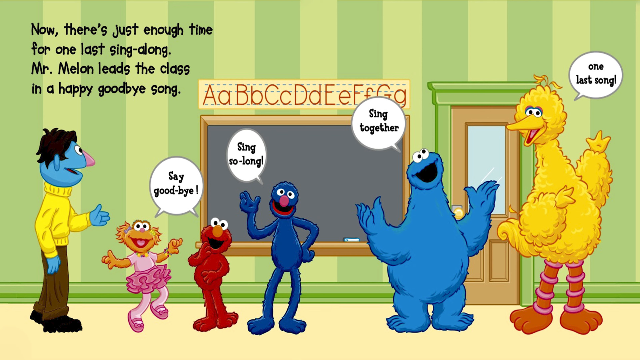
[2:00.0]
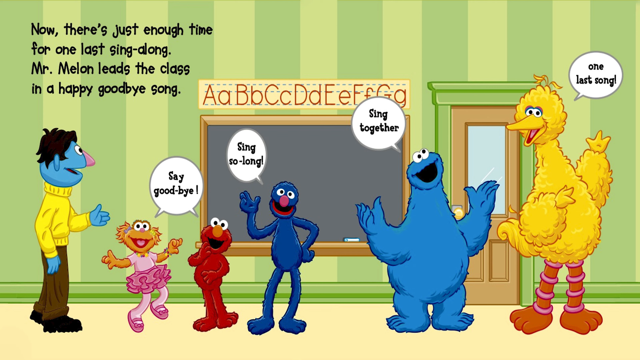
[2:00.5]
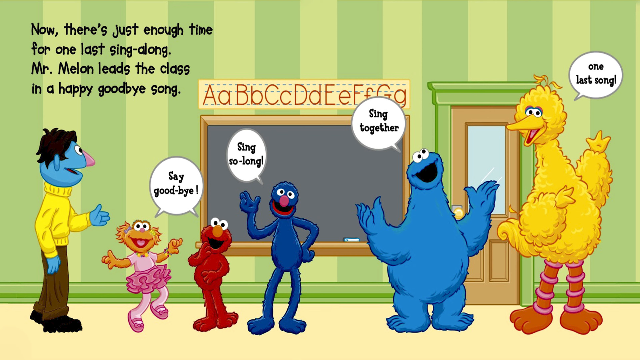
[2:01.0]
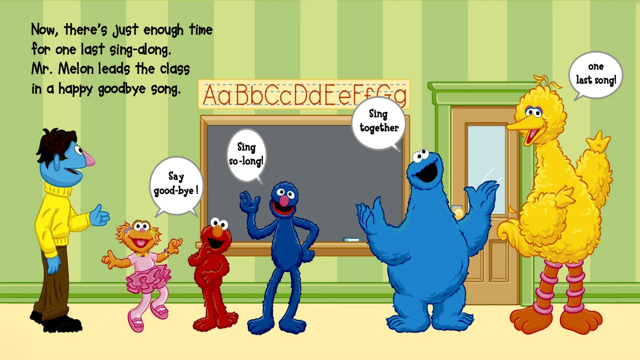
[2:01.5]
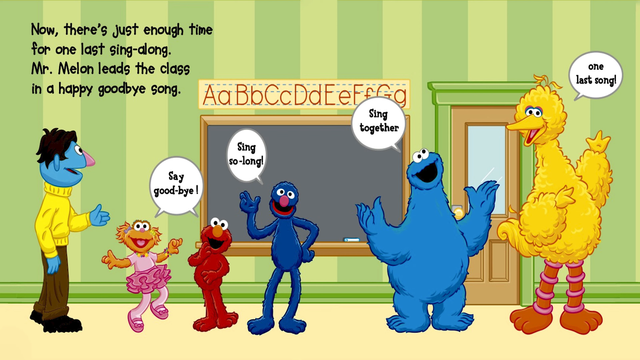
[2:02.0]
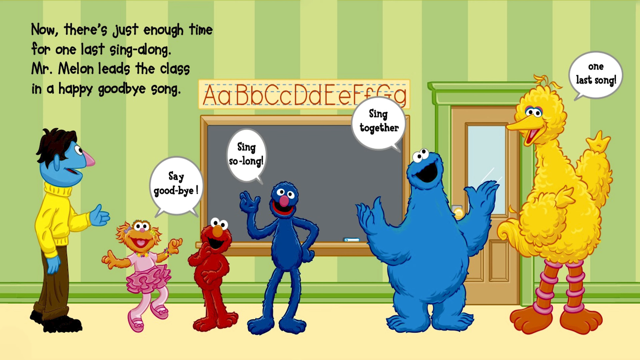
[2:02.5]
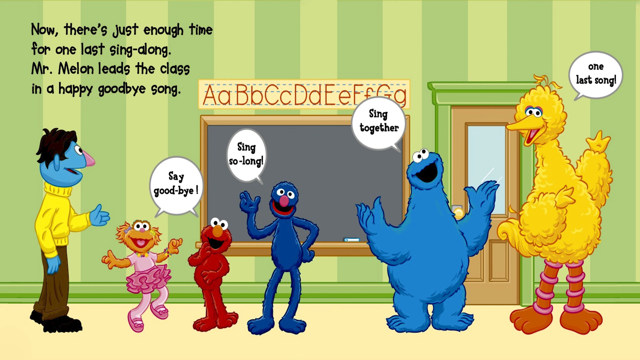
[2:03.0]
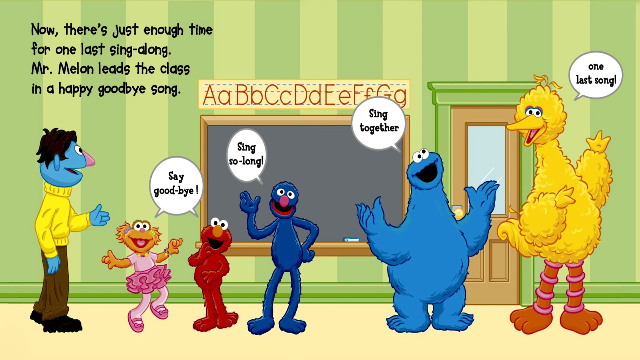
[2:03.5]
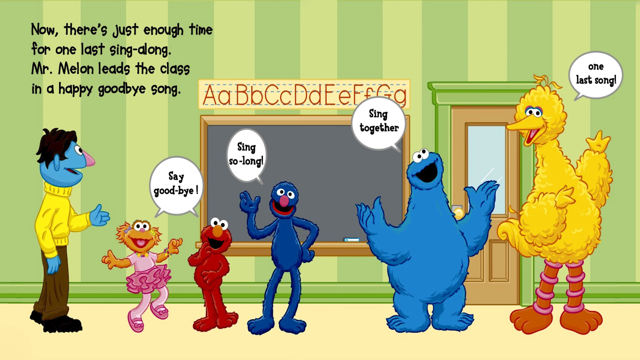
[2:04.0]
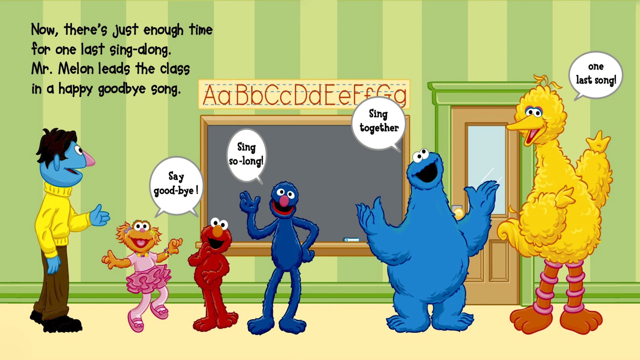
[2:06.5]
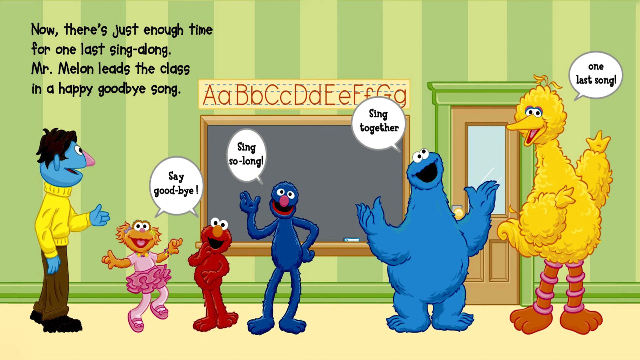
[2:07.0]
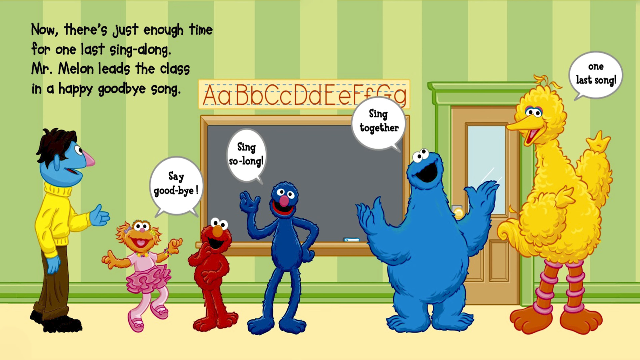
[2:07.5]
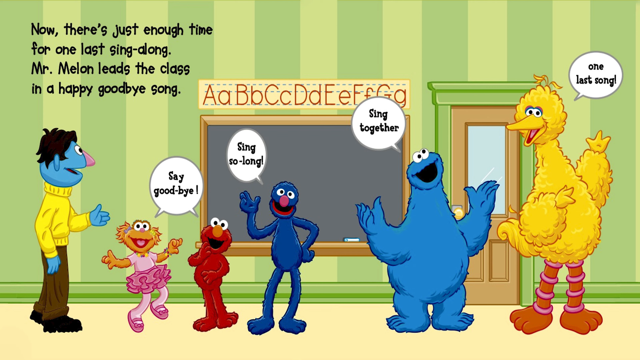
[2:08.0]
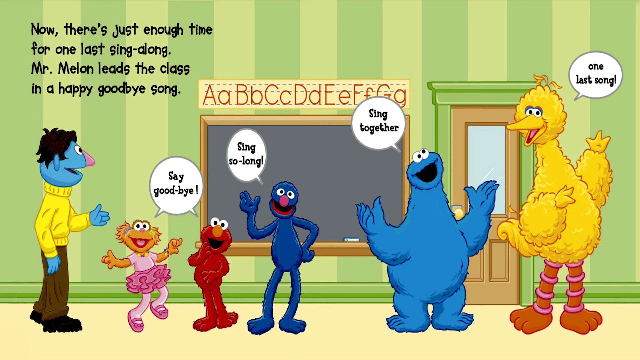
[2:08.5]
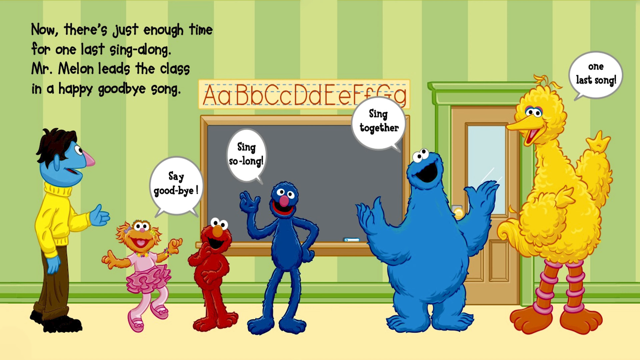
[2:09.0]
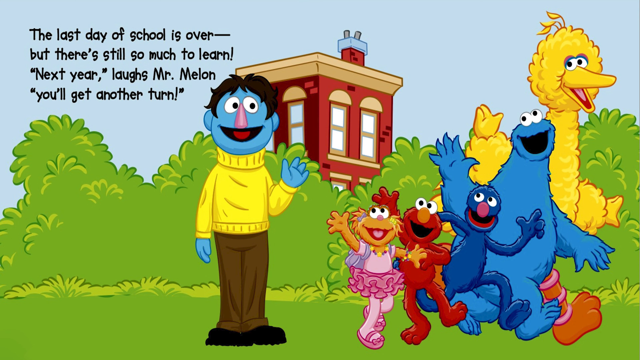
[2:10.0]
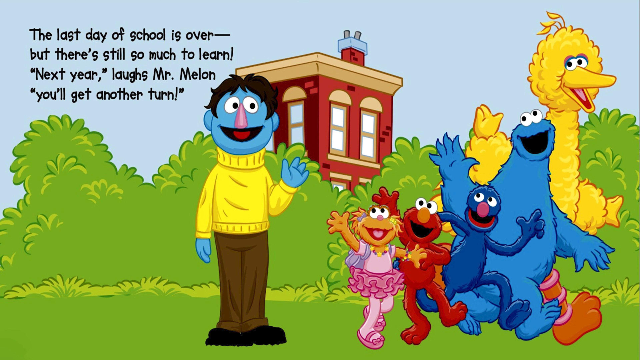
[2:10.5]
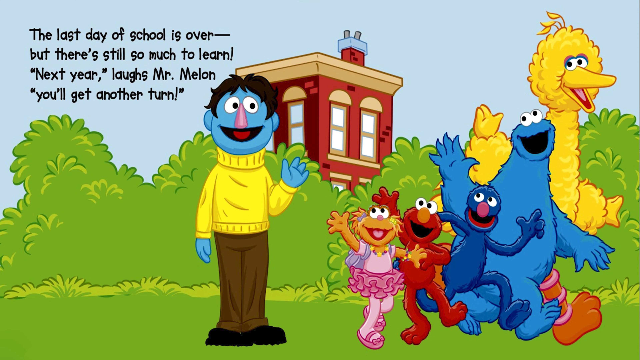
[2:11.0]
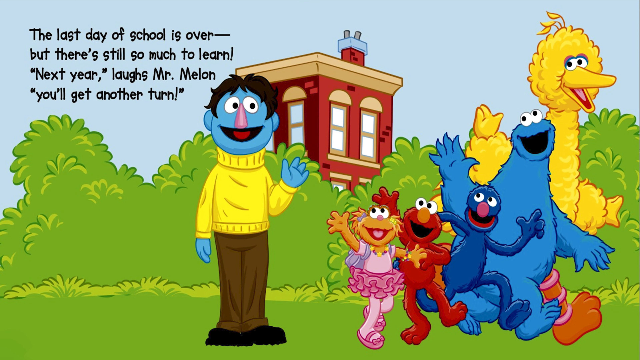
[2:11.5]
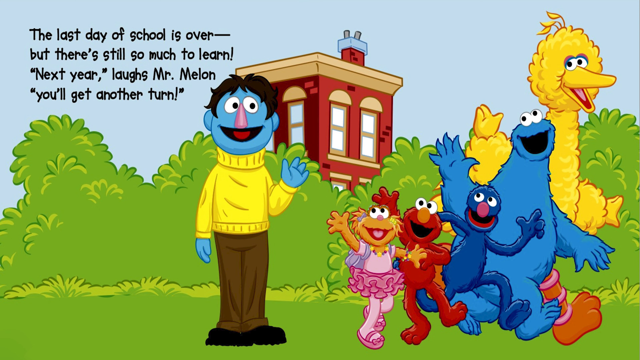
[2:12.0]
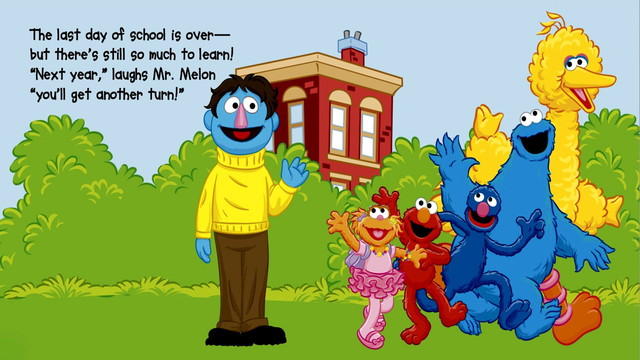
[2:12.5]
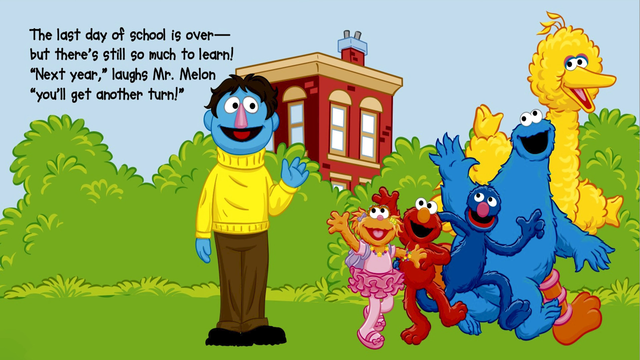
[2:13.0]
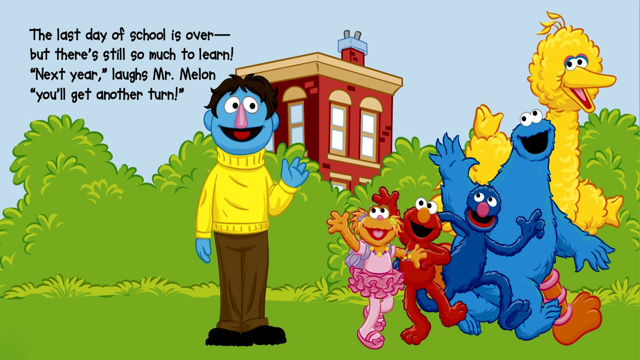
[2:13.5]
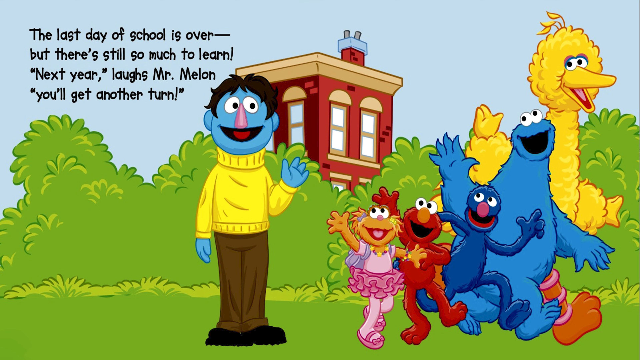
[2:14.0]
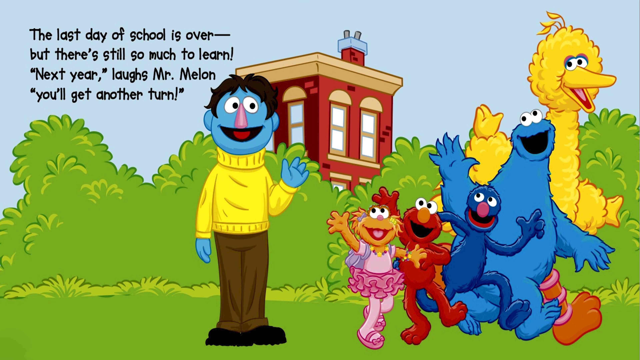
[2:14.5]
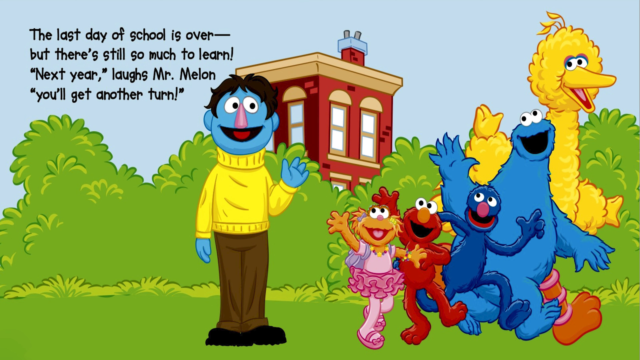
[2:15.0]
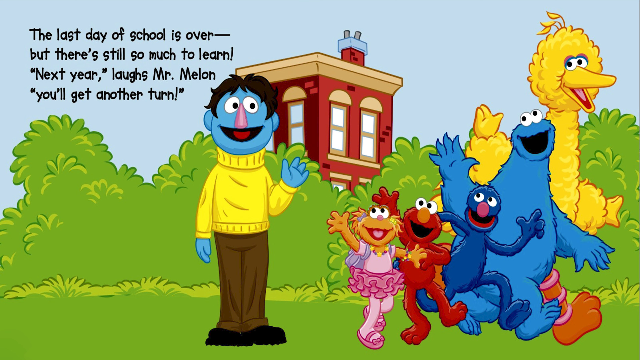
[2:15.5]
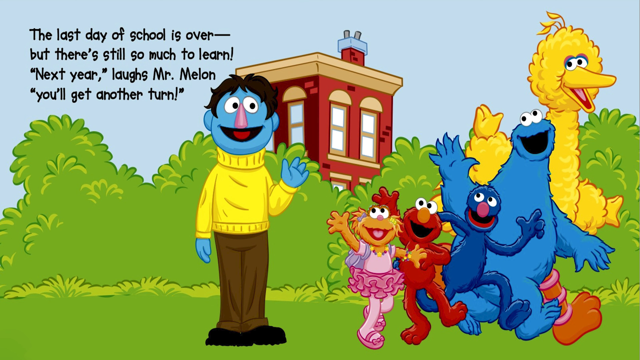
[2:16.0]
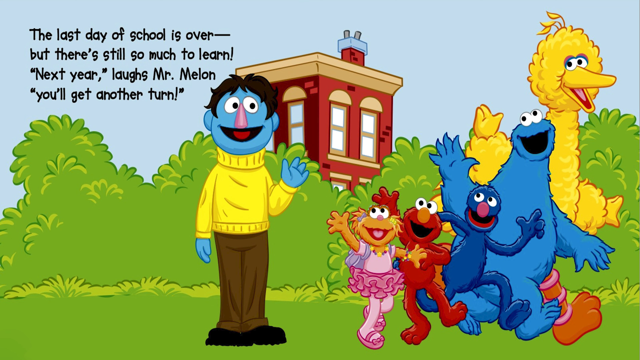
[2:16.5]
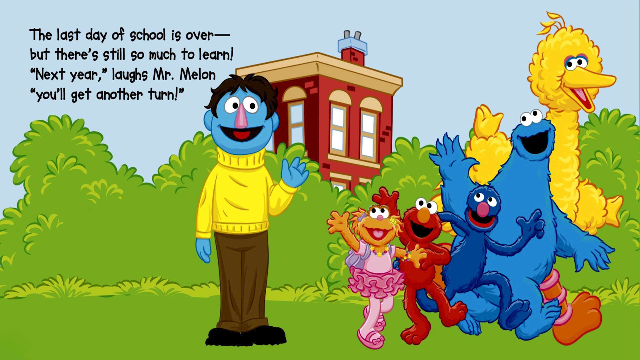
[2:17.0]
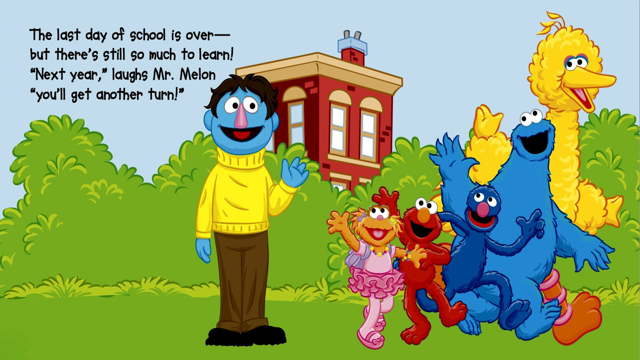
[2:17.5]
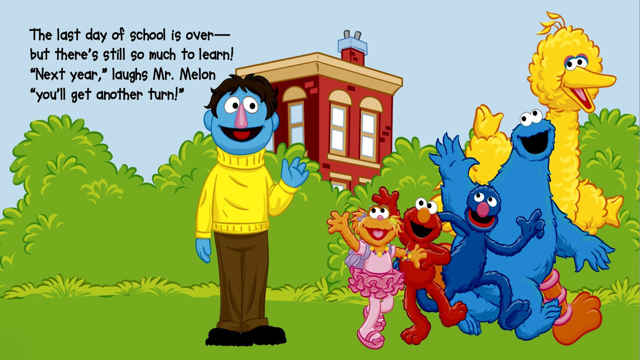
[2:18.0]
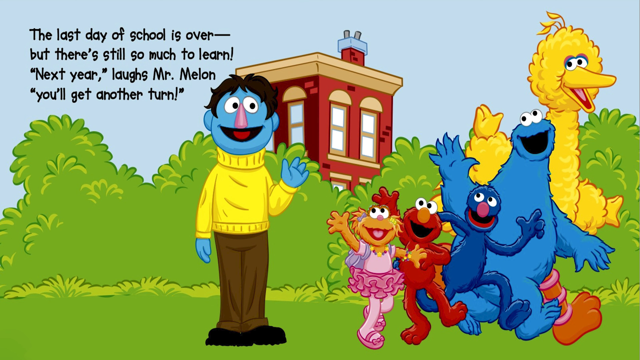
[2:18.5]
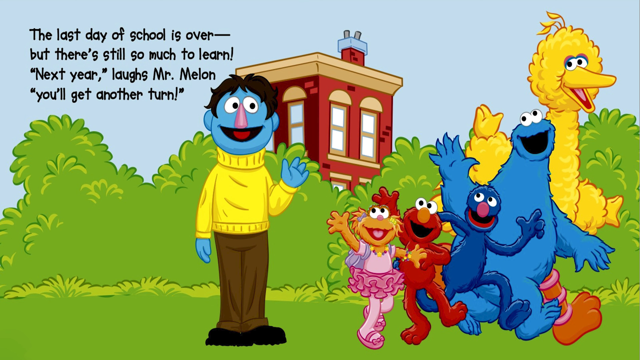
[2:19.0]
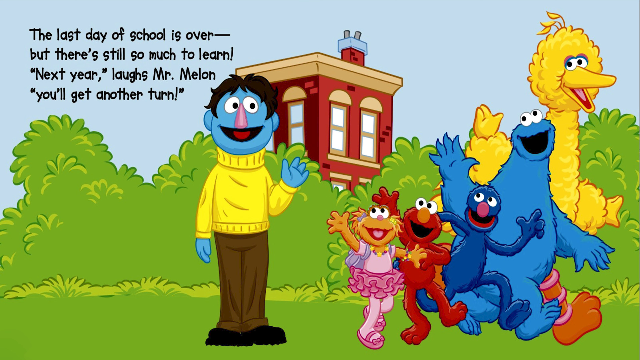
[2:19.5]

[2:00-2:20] The class appears to be wrapping up, with some characters saying "say goodbye," some "sing so long," and some "sing together one last song." They seem to be heading toward the door, with the teacher almost guiding them toward it. Text says "Now there's just enough time for one last sing-along. Mr. Millen leads the class in a happy goodbye song." Behind the class are the green wall and the erased chalkboard. The next slide shows the class outside. The little girl in the pink tutu appears to have a backpack, while the others do not seem to. The teacher still wears a yellow long-sleeved sweater and brown pants.